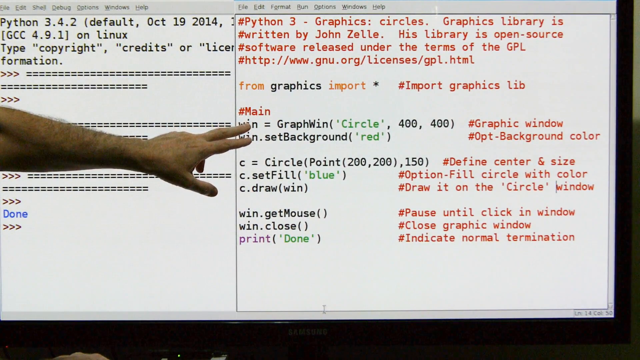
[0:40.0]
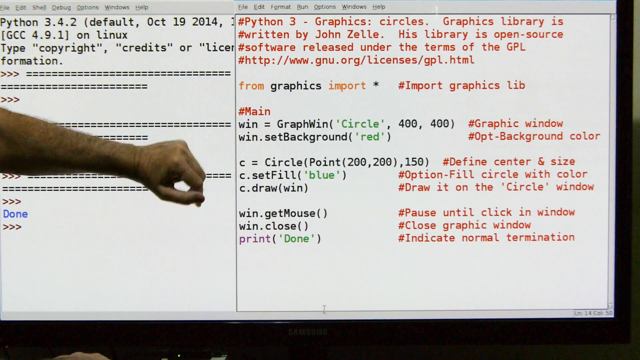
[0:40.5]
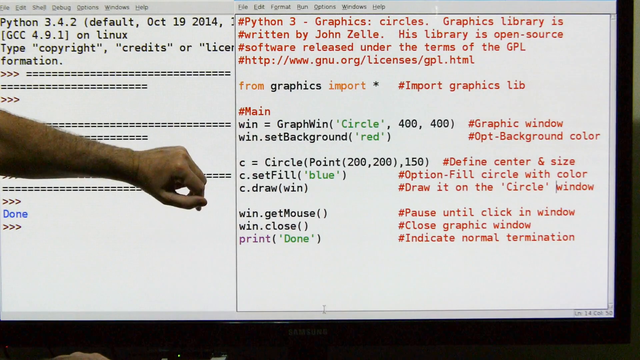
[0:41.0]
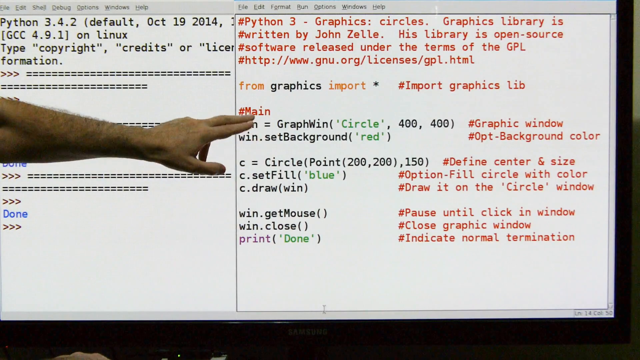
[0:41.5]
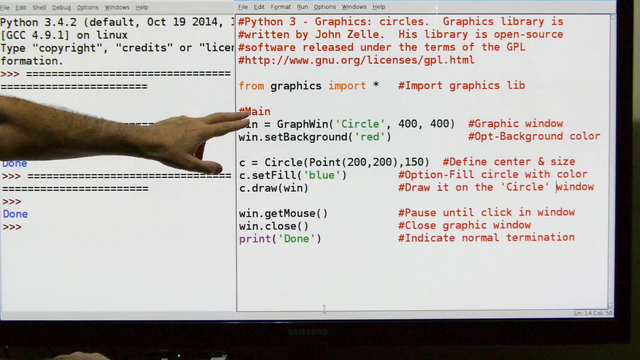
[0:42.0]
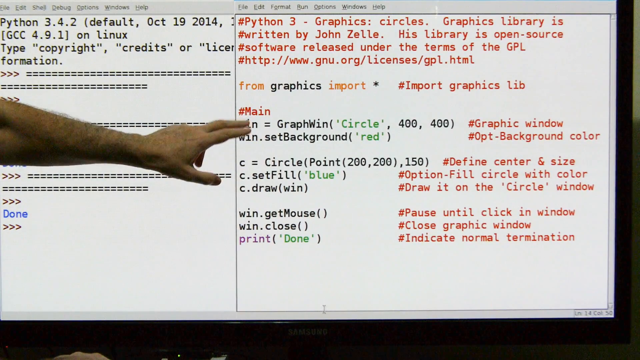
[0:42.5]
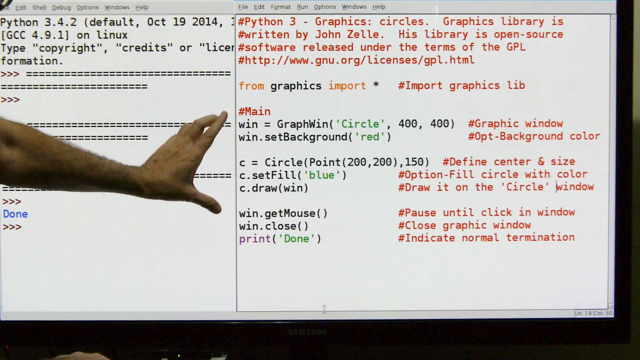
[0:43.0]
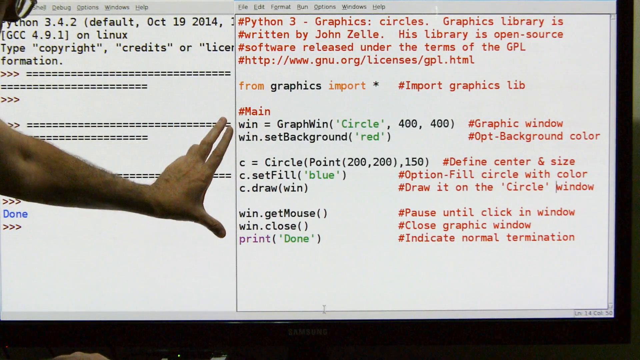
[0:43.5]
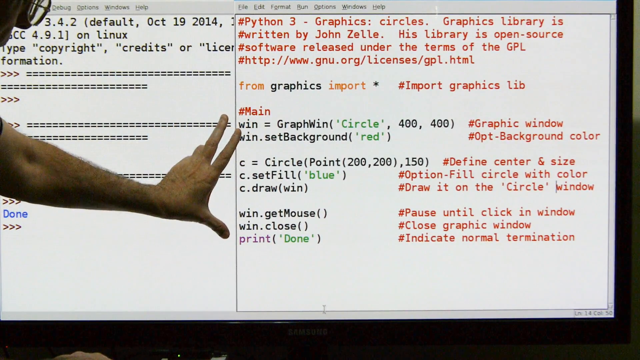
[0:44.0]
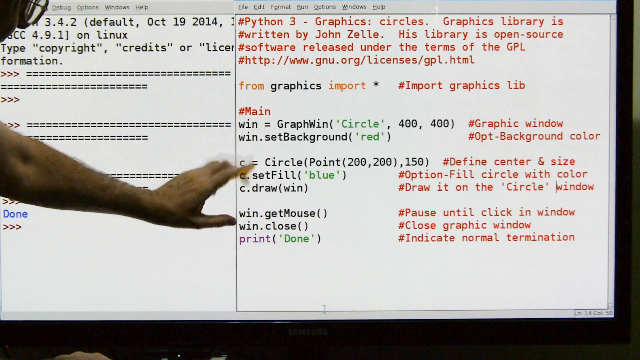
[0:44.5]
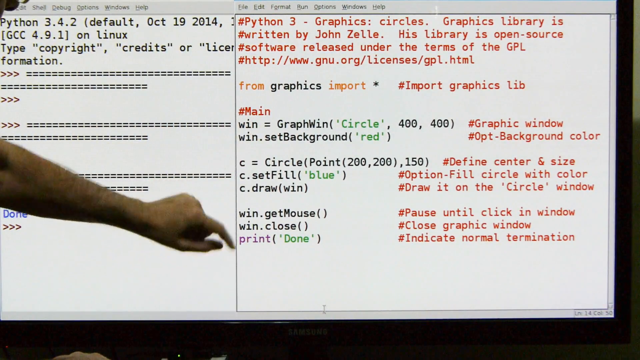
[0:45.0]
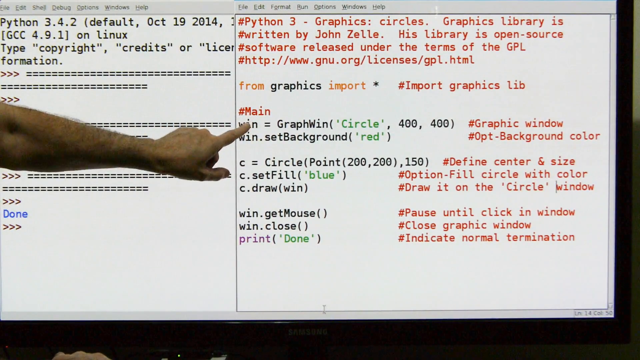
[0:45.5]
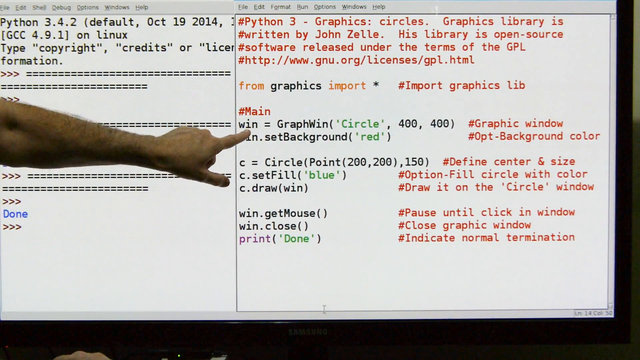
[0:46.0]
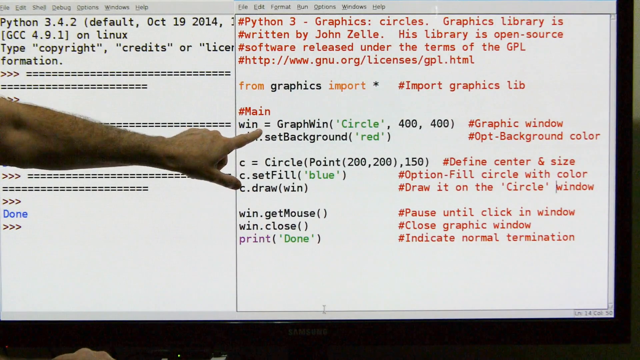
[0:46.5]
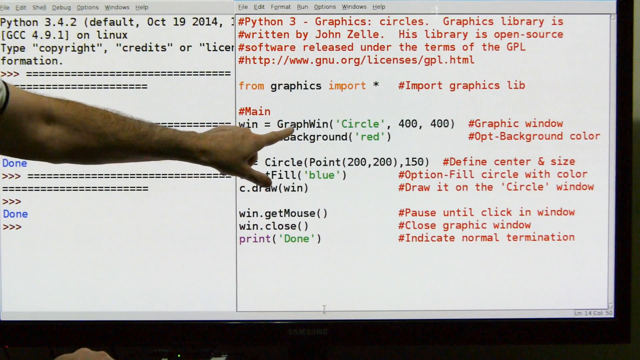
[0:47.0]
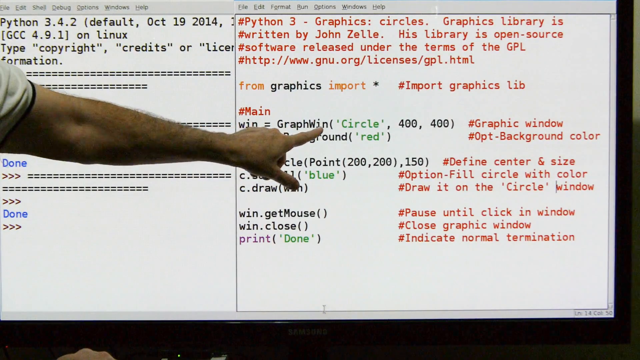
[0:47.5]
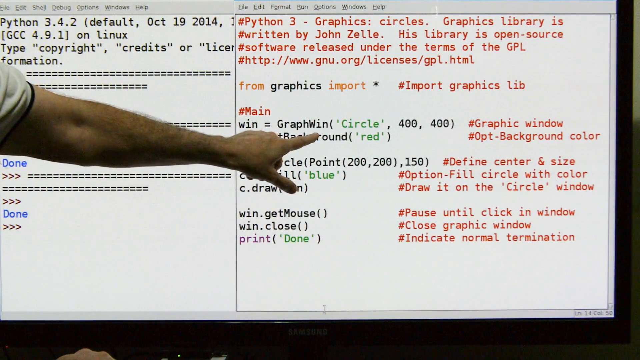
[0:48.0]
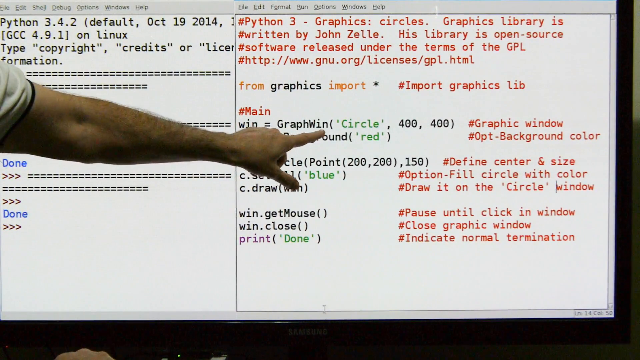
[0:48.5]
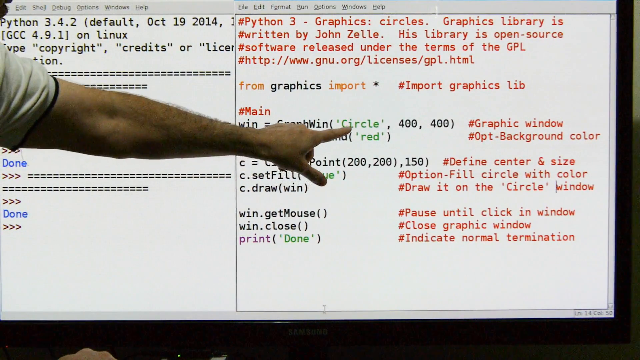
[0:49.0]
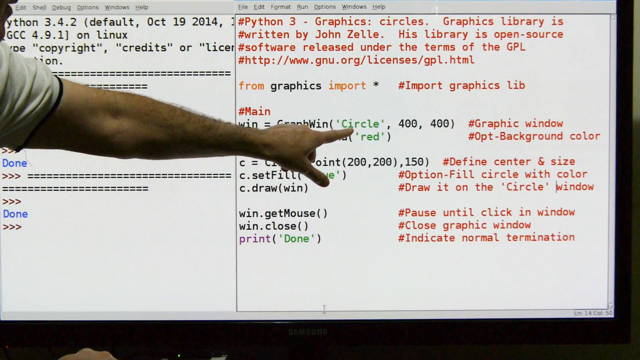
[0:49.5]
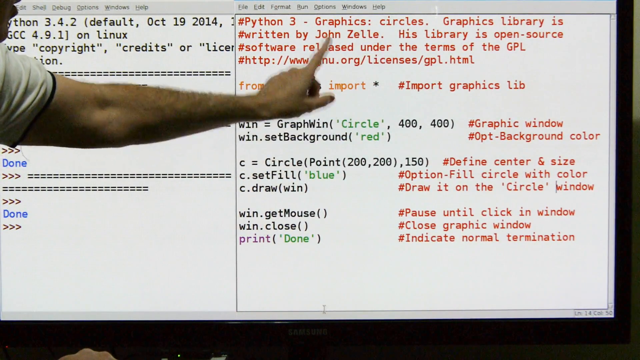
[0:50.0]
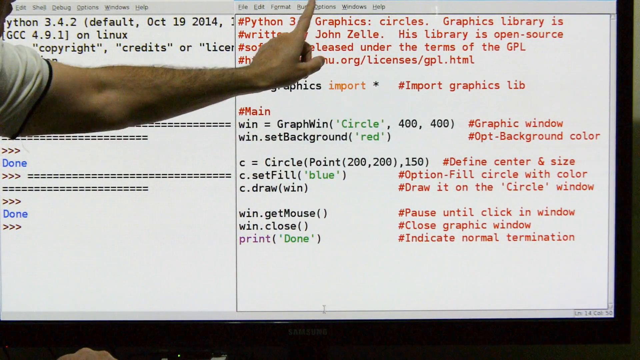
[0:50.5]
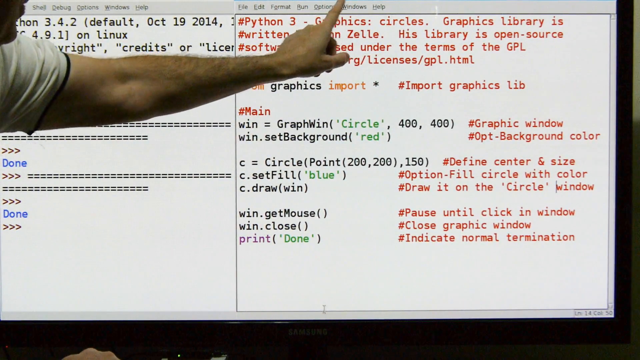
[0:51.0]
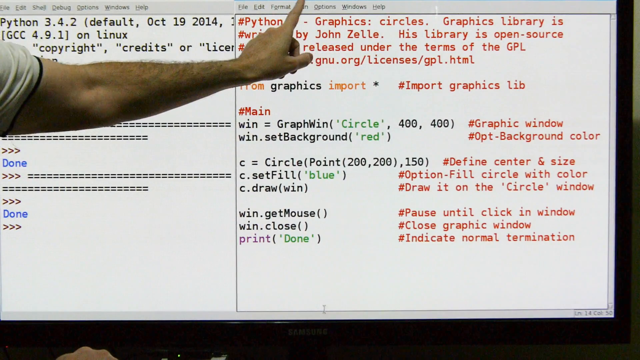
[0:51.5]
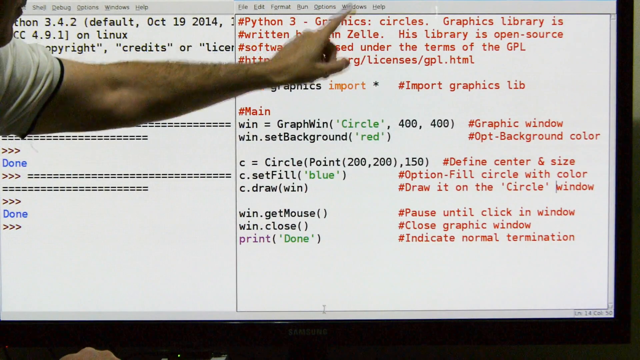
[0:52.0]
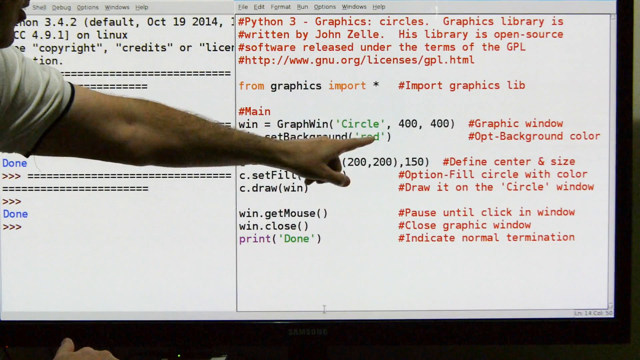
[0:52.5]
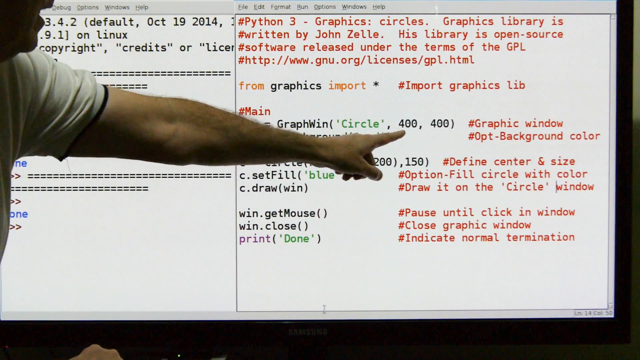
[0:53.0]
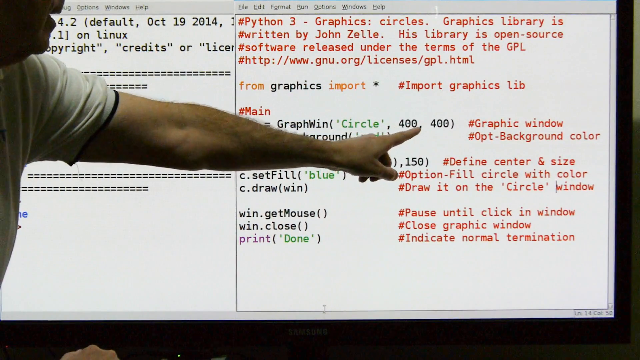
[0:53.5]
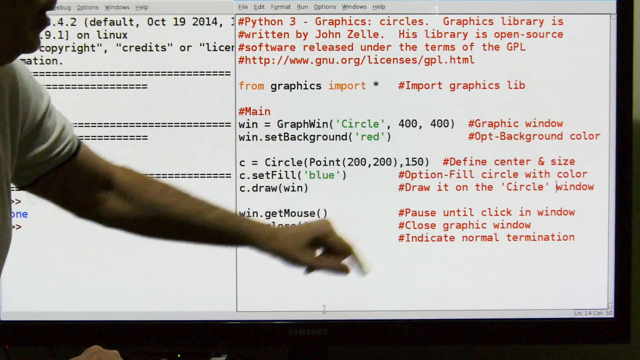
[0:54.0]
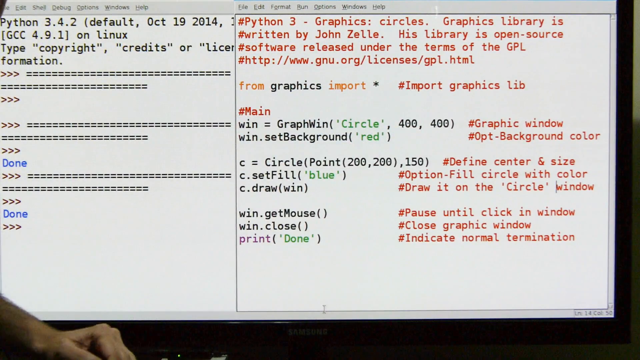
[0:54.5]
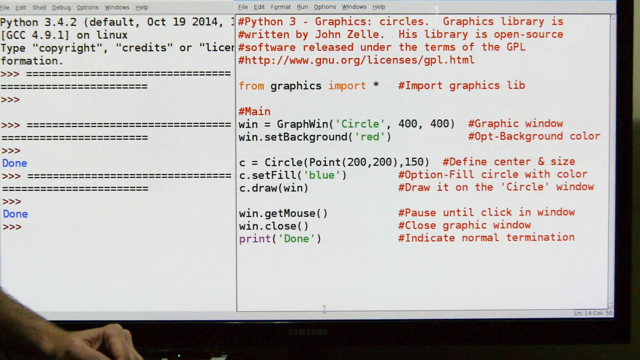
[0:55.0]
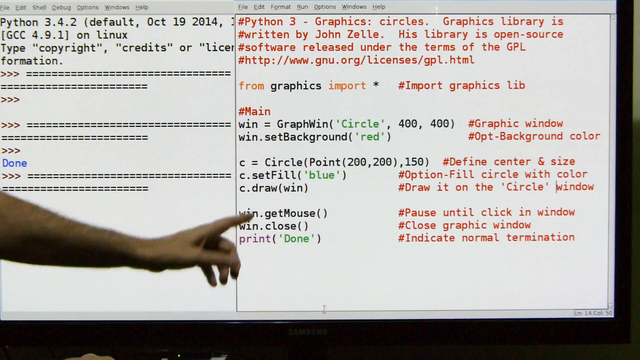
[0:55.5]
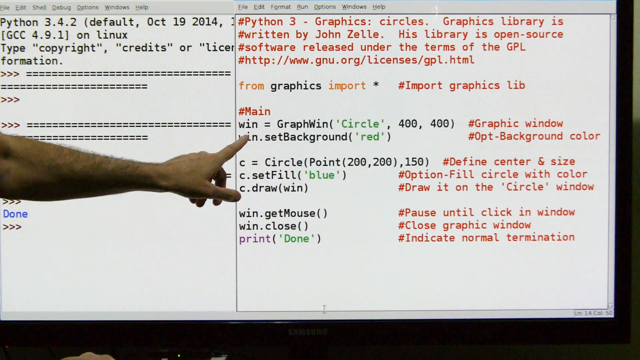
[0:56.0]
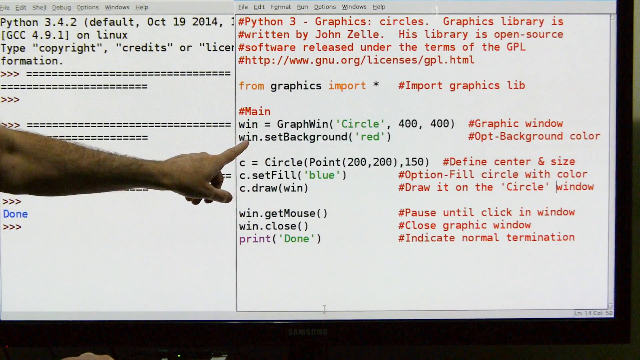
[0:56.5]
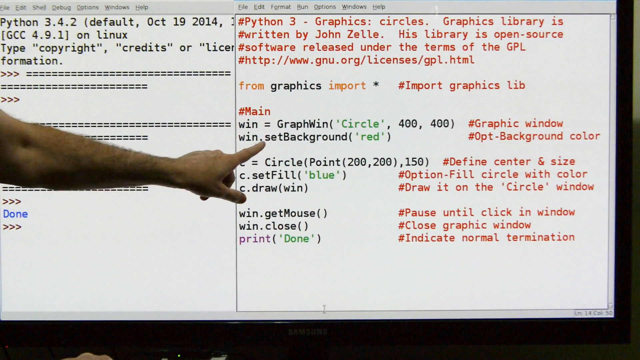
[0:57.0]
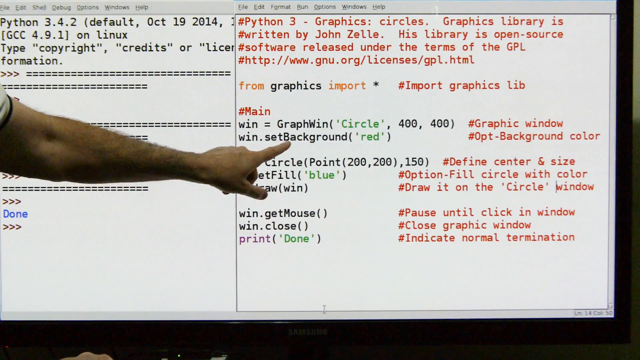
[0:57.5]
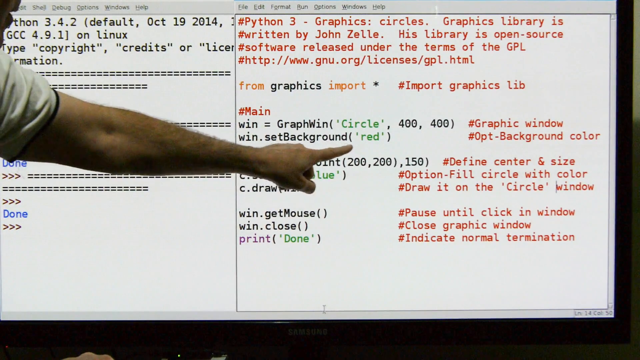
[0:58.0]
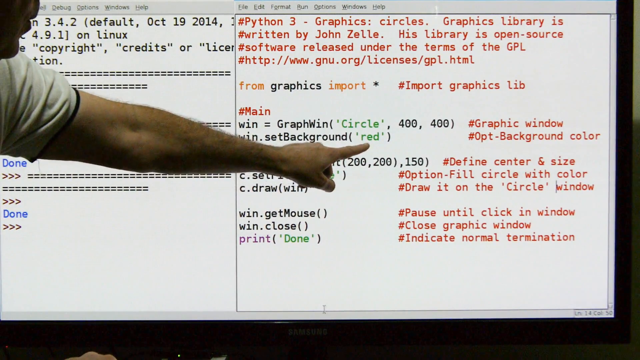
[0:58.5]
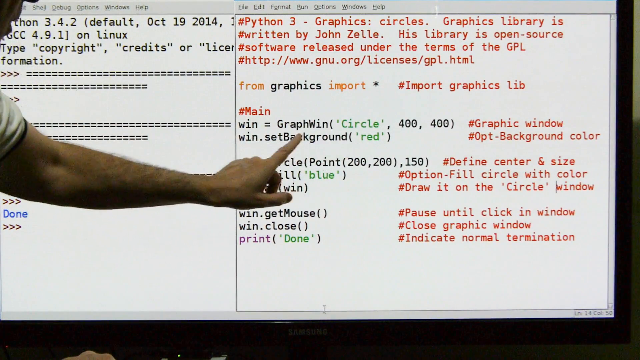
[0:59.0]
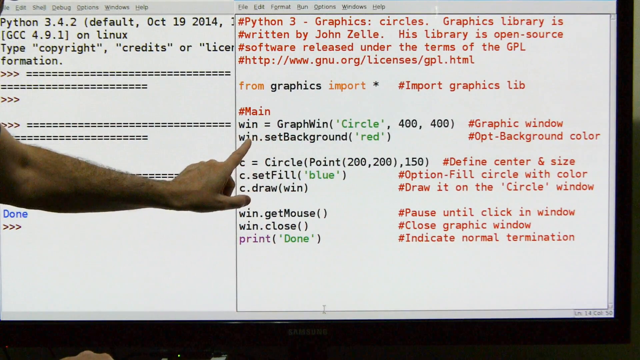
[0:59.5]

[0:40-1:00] The teacher continues explaining, pointing at the Python script that uses the graphics library. The code creates a 400 by 400 pixel window titled circle with a red background. He points with hand gestures up and down and side to side, moving his lips as he reads each word, going from the red text to the orange text to the black text and the green text. The colours visible are red, orange, blue, green and black.